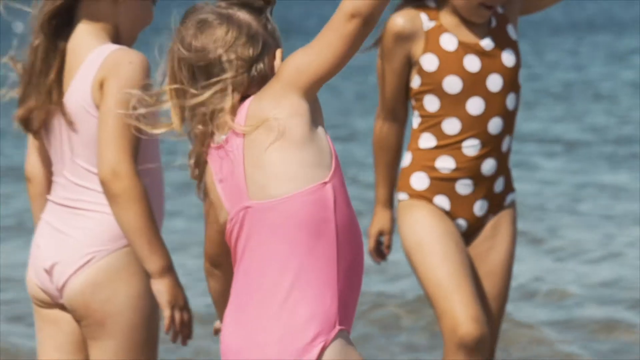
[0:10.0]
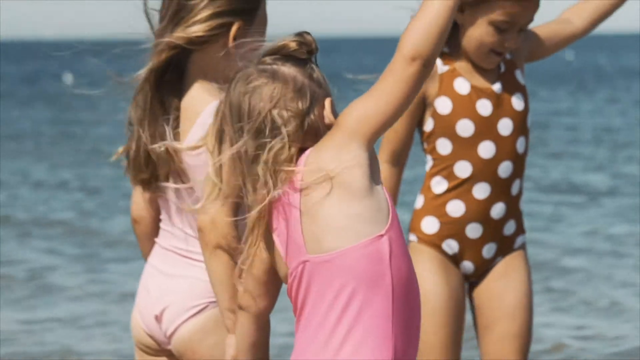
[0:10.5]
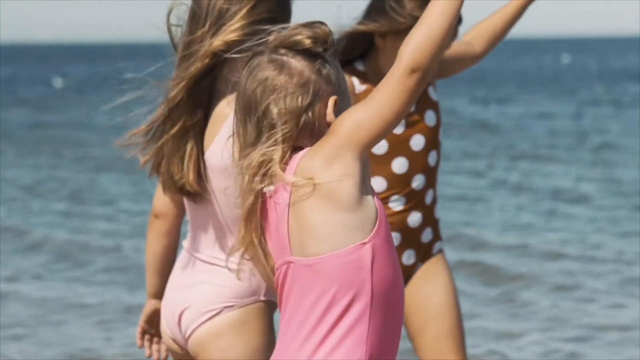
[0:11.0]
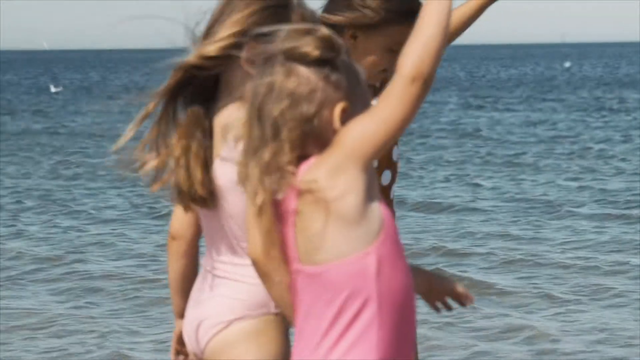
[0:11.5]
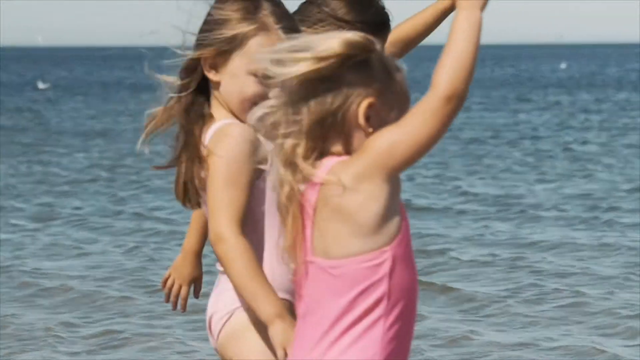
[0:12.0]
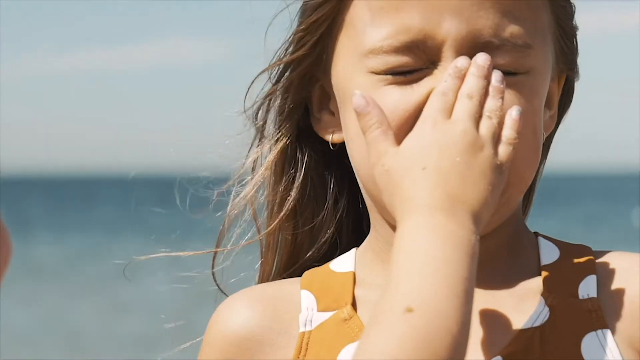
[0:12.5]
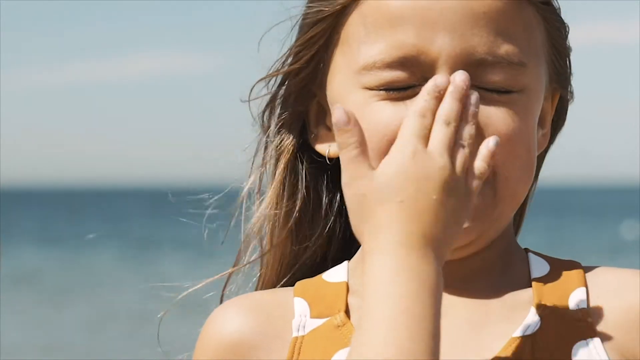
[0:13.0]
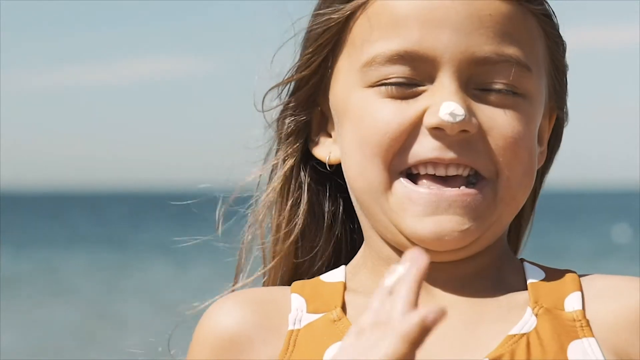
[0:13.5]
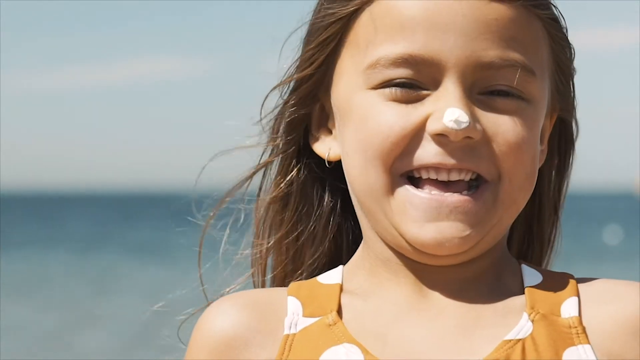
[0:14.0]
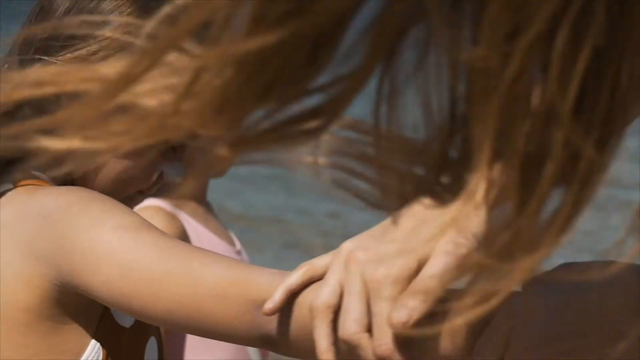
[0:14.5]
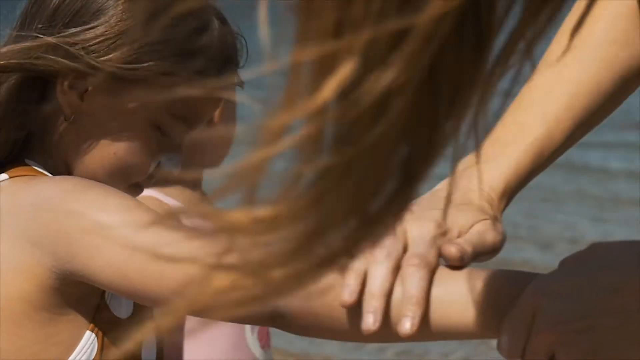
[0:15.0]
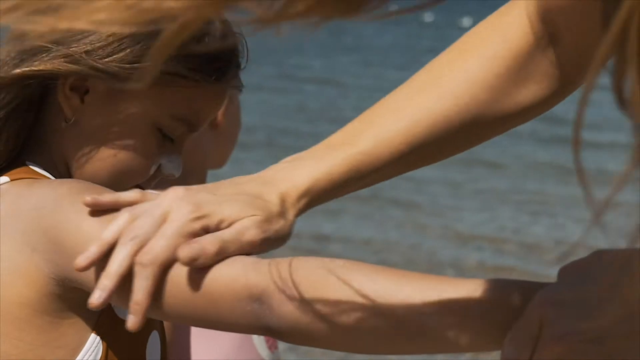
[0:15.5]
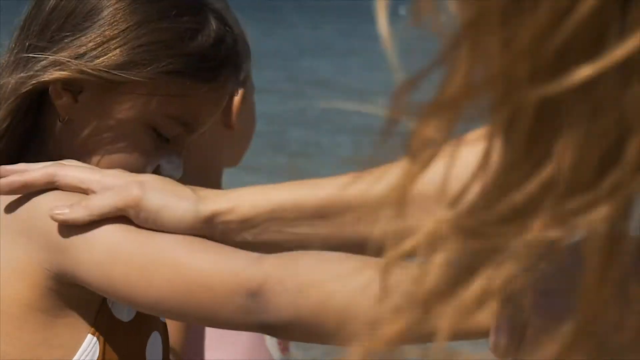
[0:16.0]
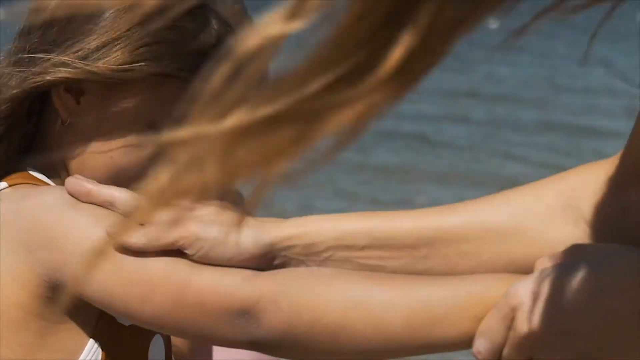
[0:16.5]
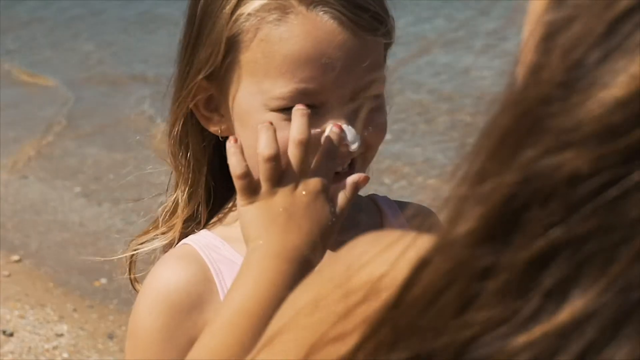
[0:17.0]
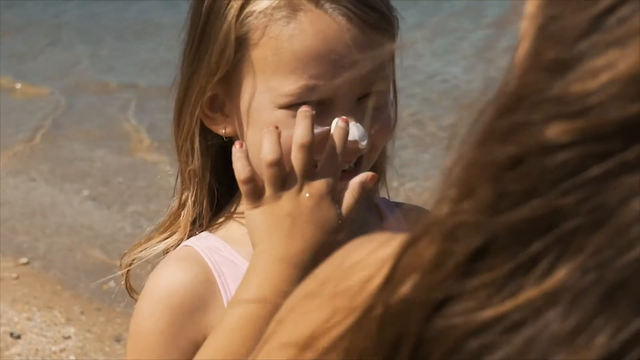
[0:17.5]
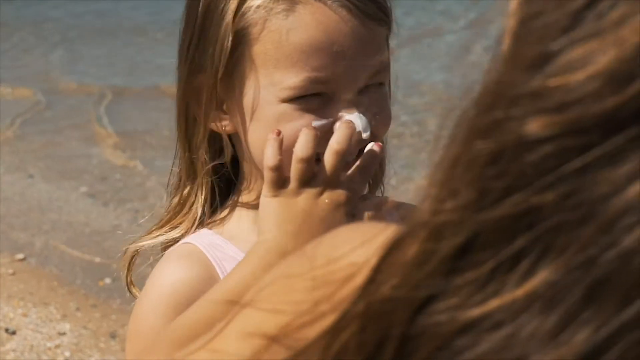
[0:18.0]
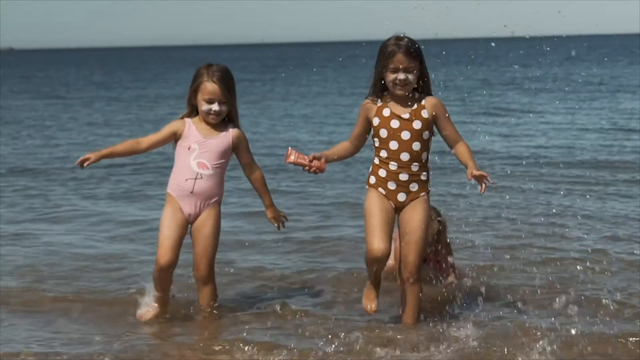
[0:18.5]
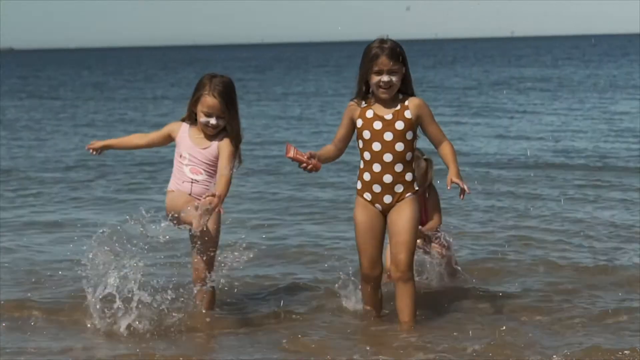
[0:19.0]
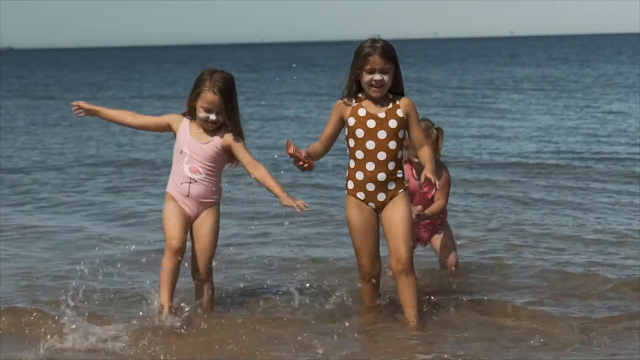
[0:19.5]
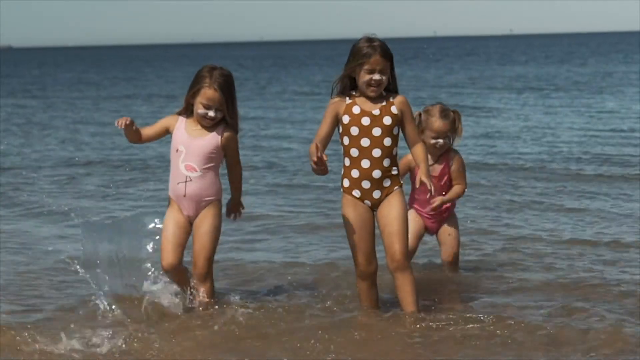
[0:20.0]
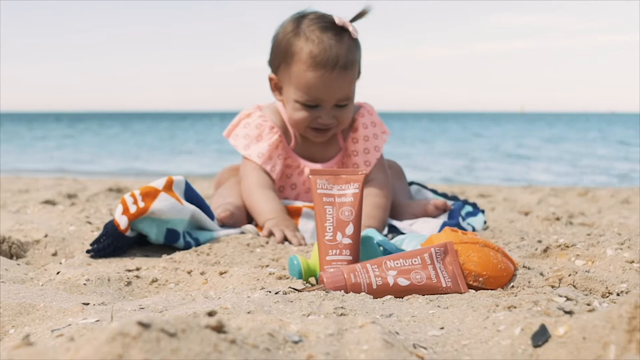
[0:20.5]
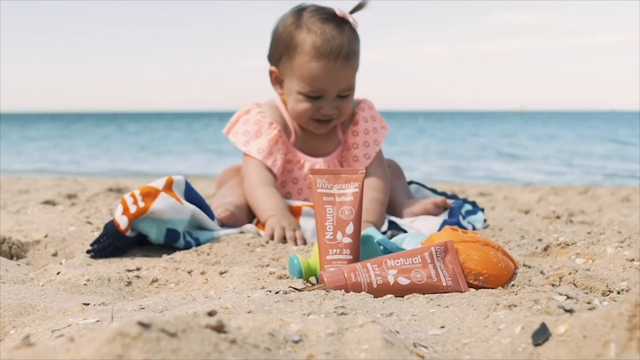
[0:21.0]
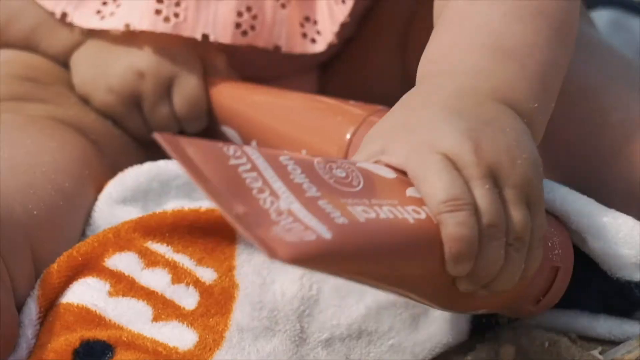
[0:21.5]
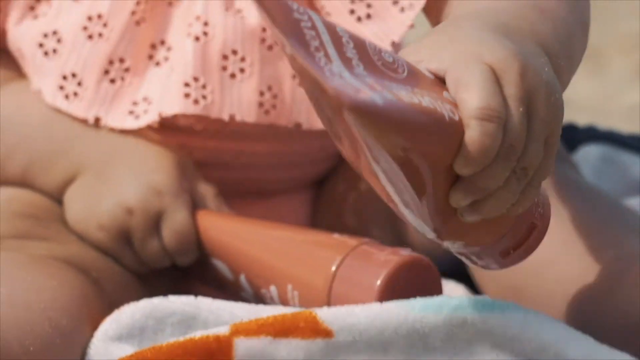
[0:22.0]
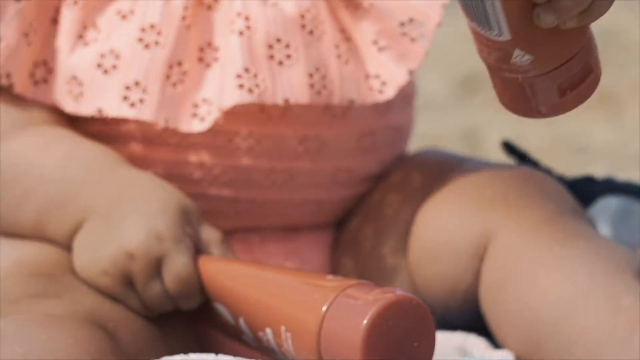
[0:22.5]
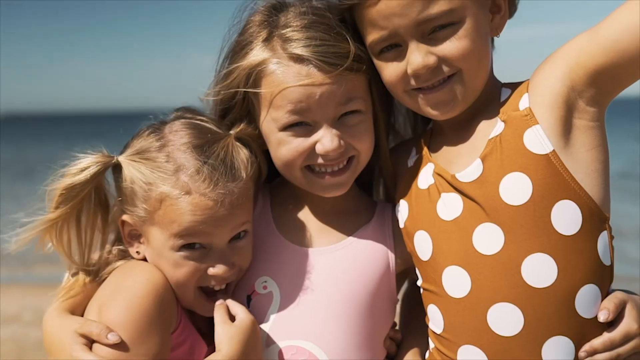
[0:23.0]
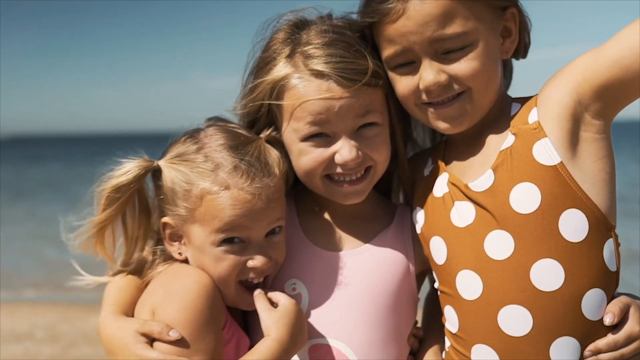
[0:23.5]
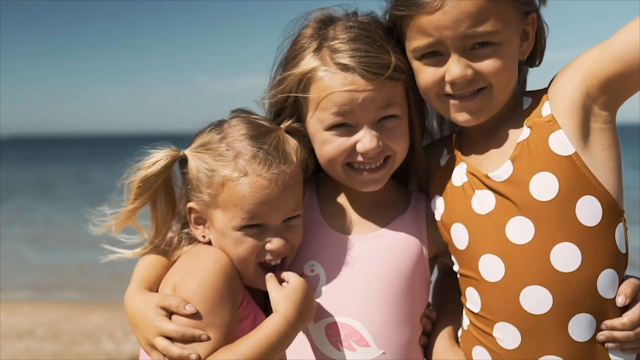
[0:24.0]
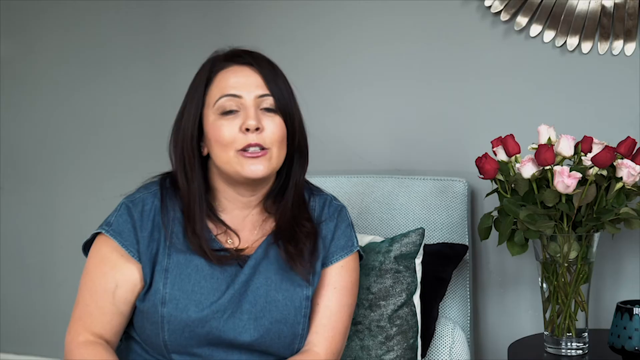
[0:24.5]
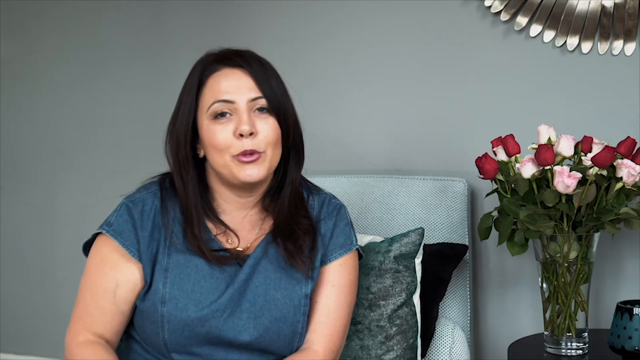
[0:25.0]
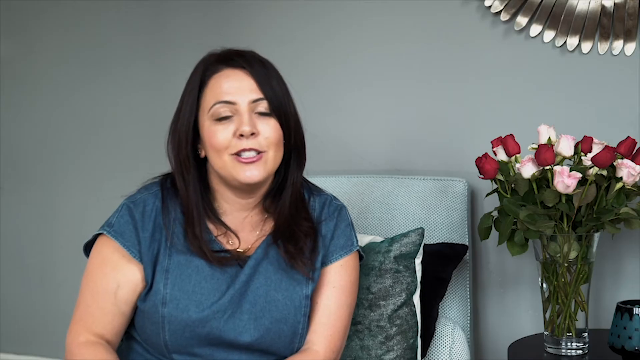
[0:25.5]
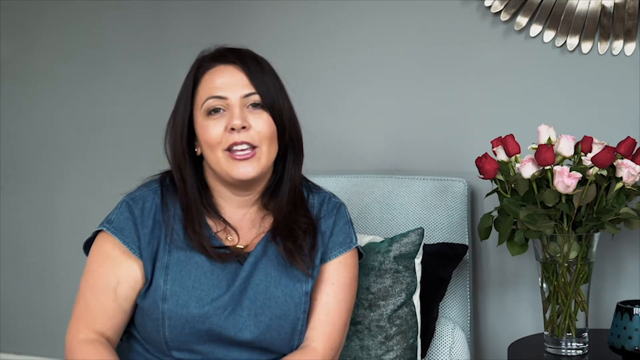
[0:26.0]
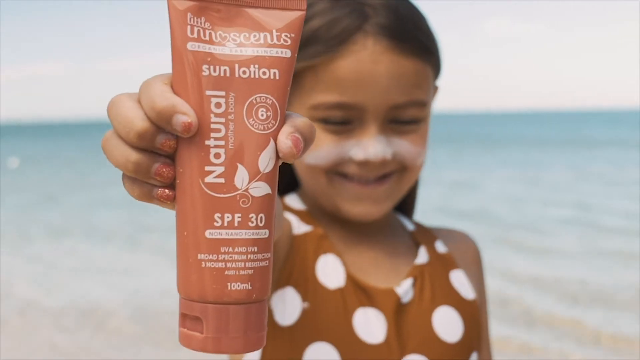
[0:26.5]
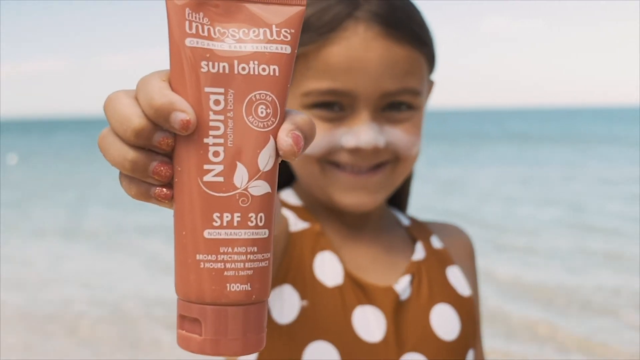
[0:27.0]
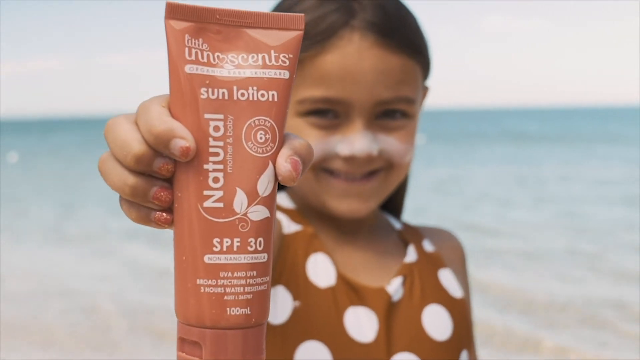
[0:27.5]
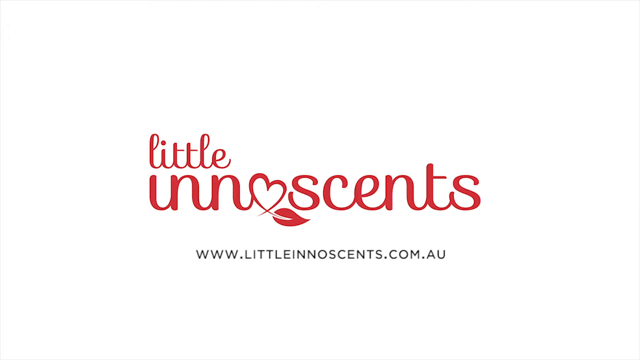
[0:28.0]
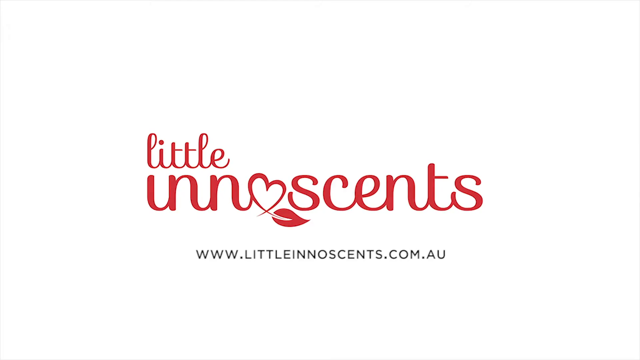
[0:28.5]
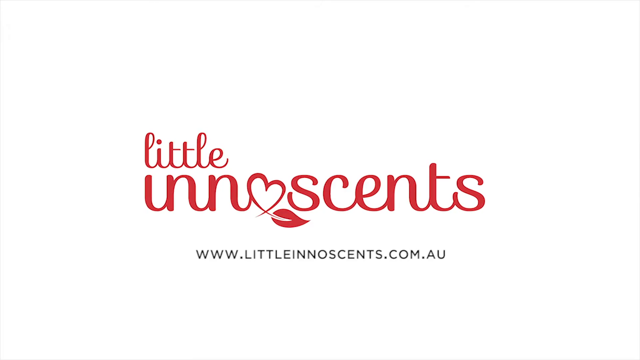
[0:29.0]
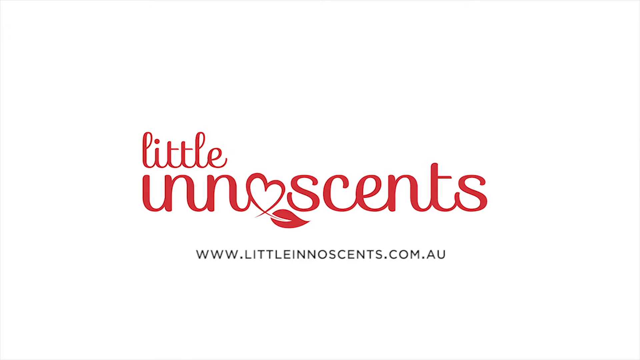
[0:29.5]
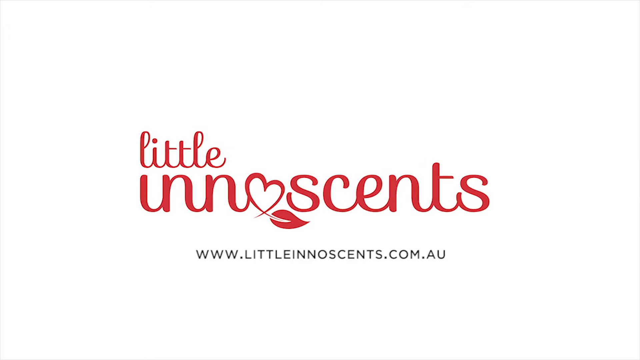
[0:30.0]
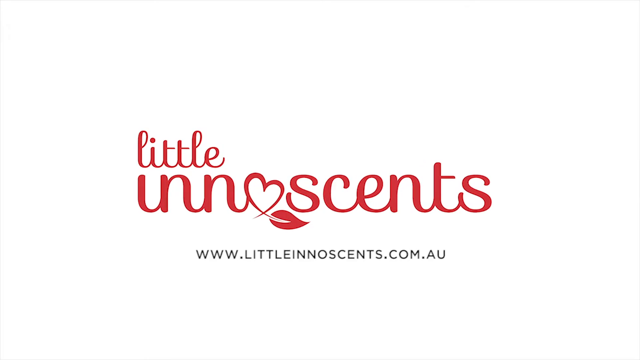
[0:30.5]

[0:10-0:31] Three little girls are using sun cream. They have sun cream on their noses and play around as they apply it and put it on each other. They are in the sea with sun cream on their faces, laughing. A little baby sits on the towels holding the cream, looking as if they would like to use it. The bottle of cream is shown, stating that it is sun cream and that it is for children; it is from a brand called Little Innocence. One shot shows a lady talking in an office-type setting away from the beach, completely separate from the beach scene with the children. The children look very happy.